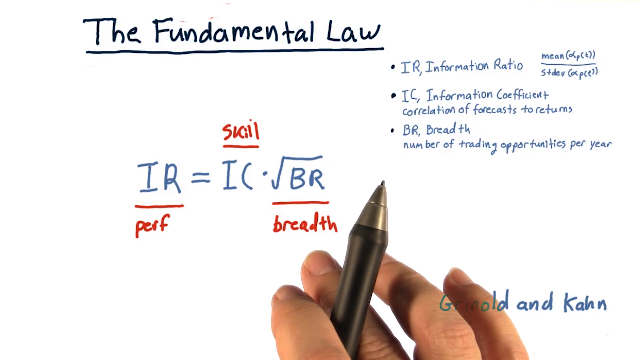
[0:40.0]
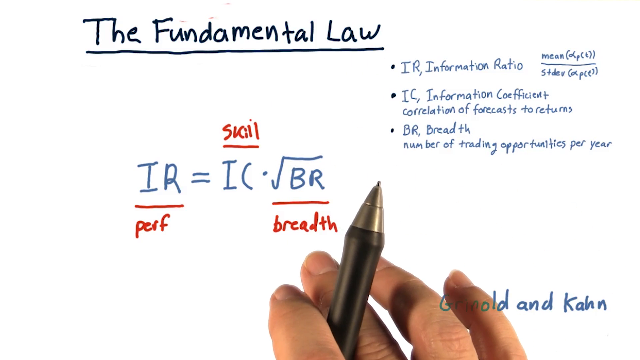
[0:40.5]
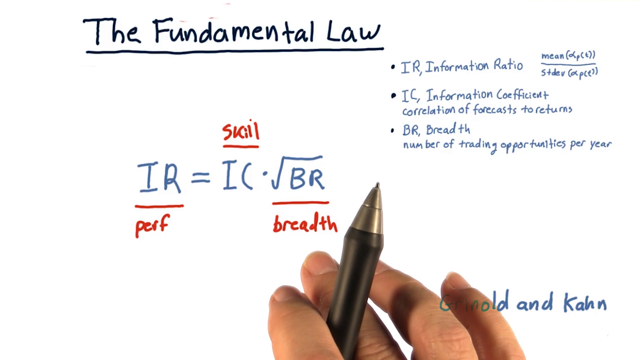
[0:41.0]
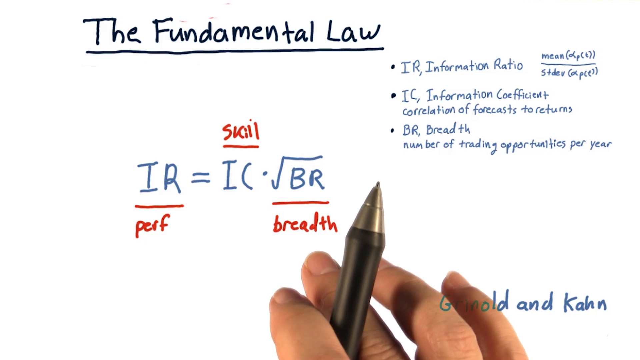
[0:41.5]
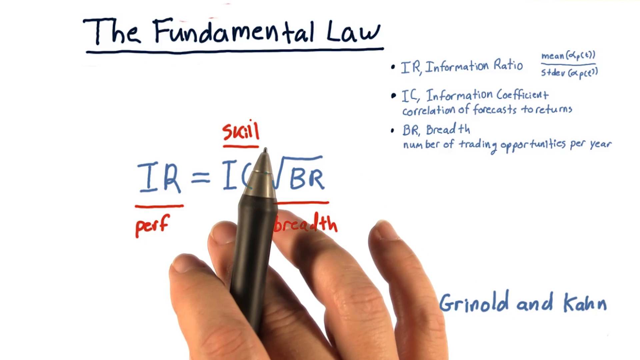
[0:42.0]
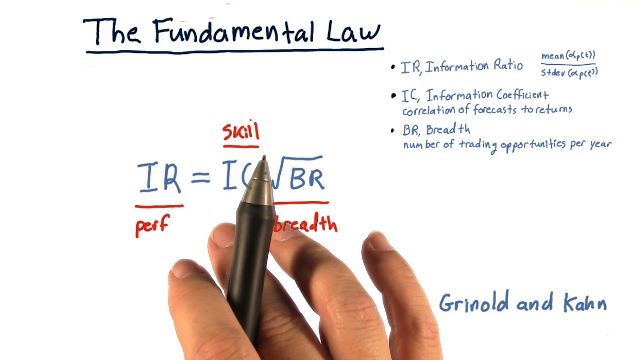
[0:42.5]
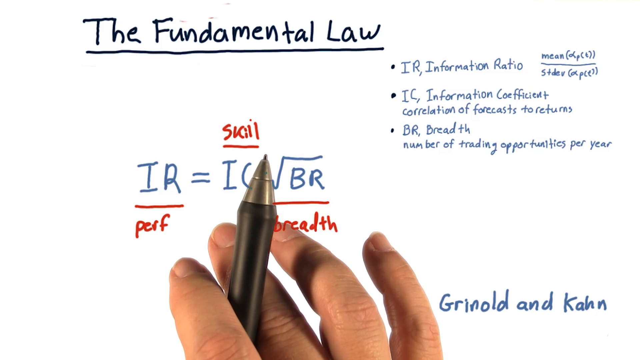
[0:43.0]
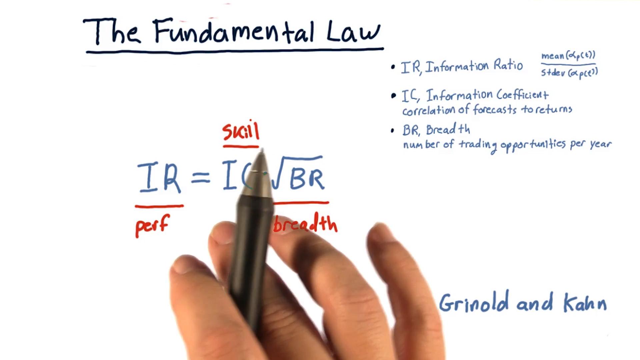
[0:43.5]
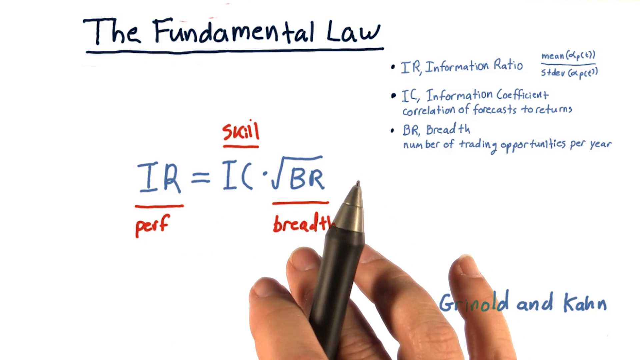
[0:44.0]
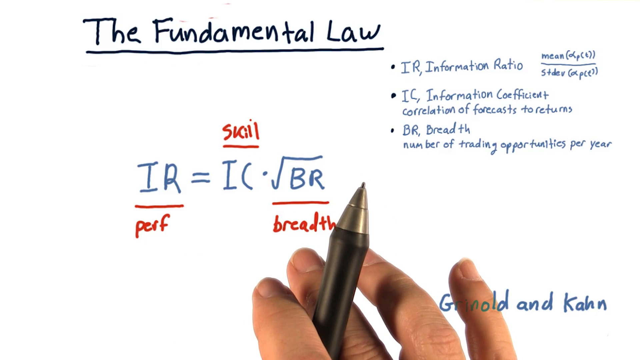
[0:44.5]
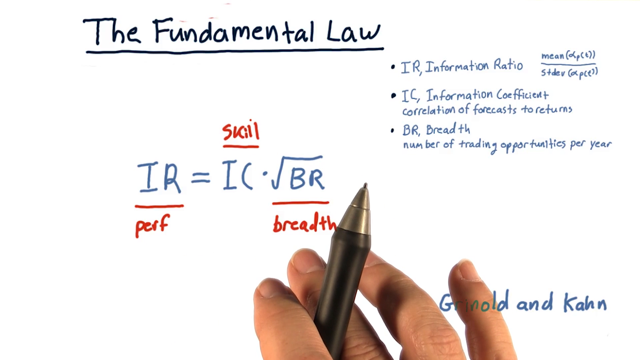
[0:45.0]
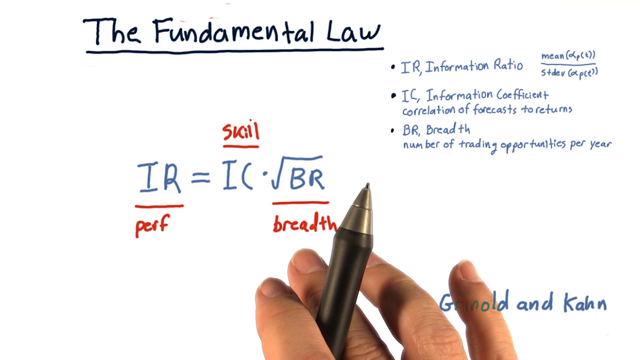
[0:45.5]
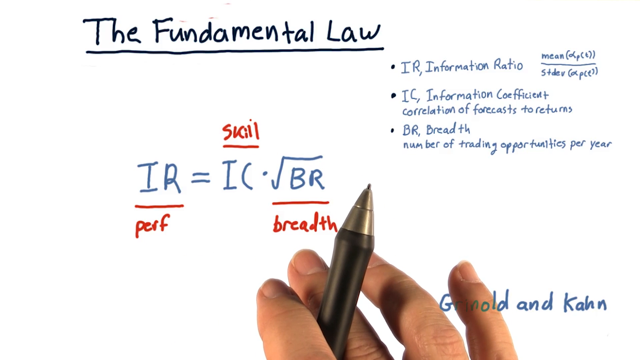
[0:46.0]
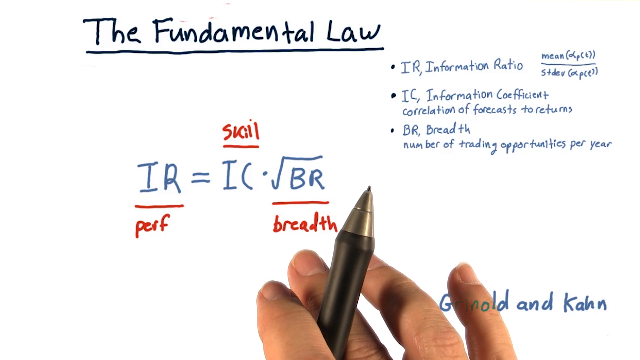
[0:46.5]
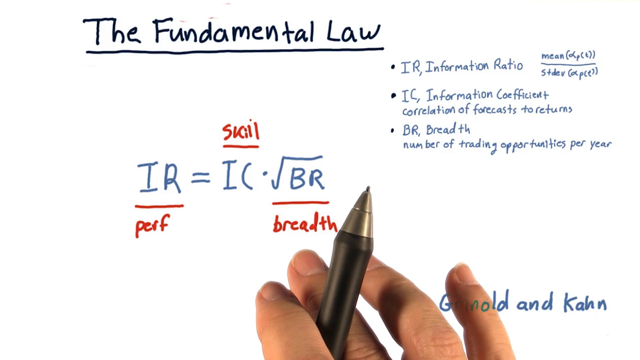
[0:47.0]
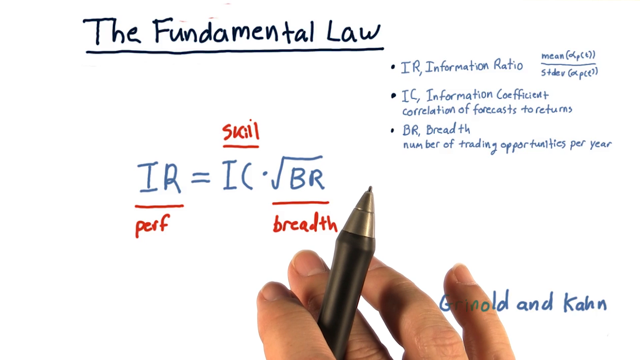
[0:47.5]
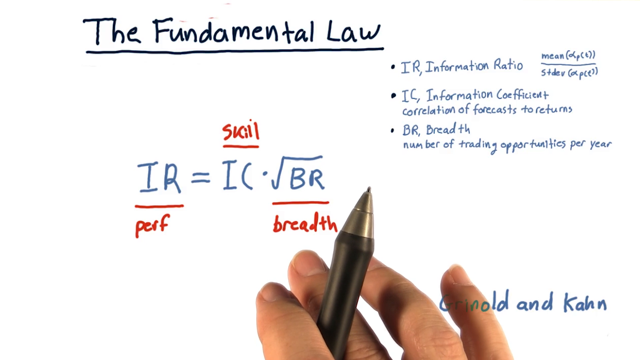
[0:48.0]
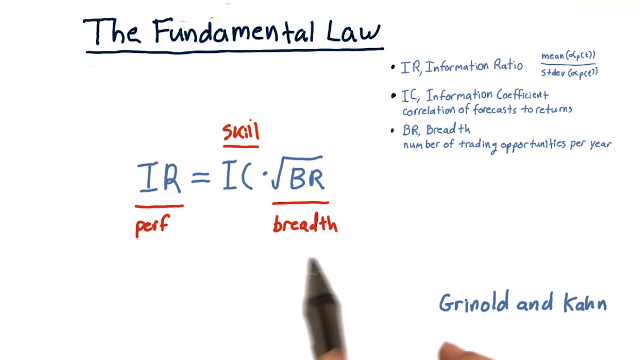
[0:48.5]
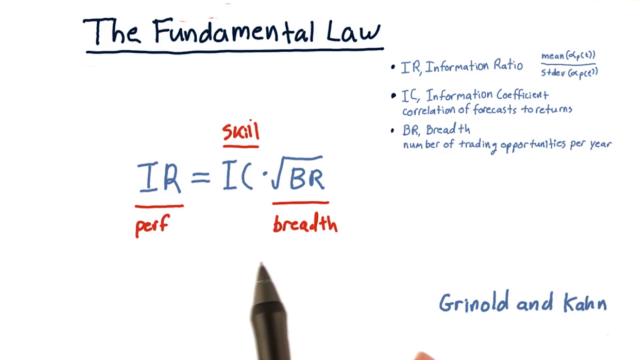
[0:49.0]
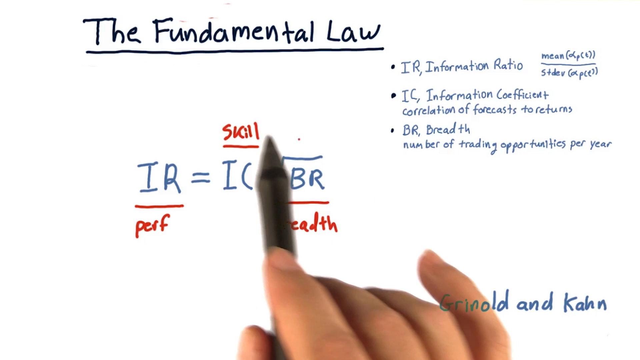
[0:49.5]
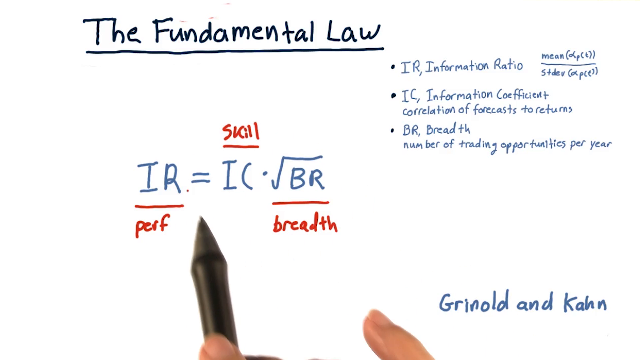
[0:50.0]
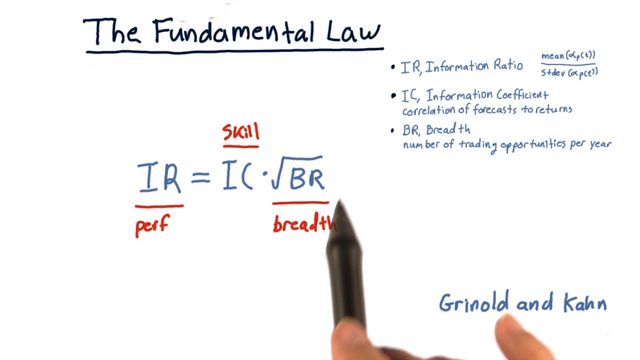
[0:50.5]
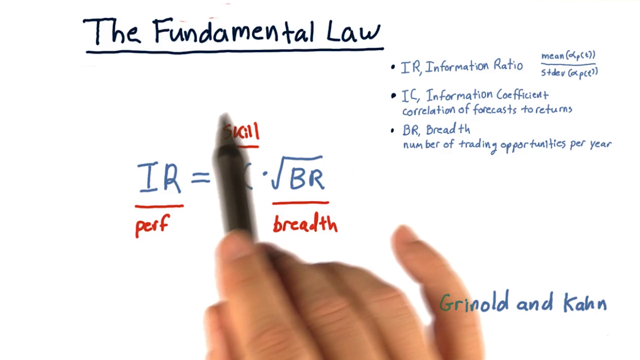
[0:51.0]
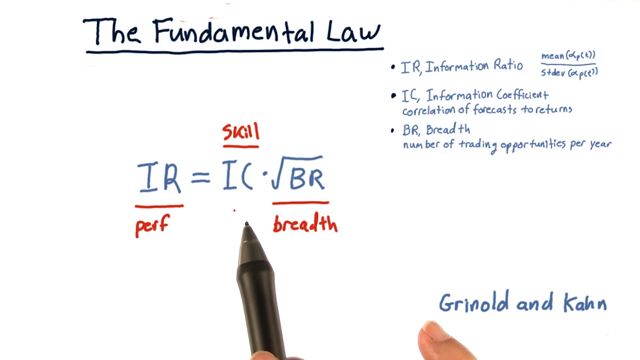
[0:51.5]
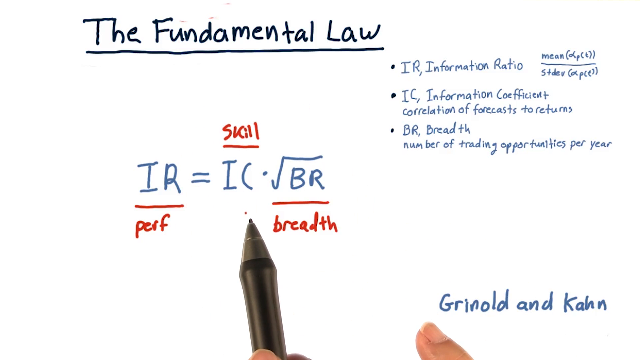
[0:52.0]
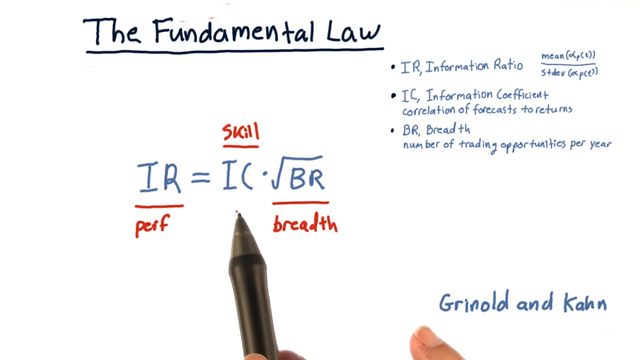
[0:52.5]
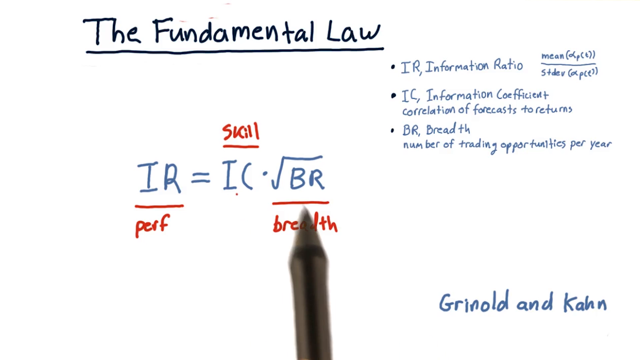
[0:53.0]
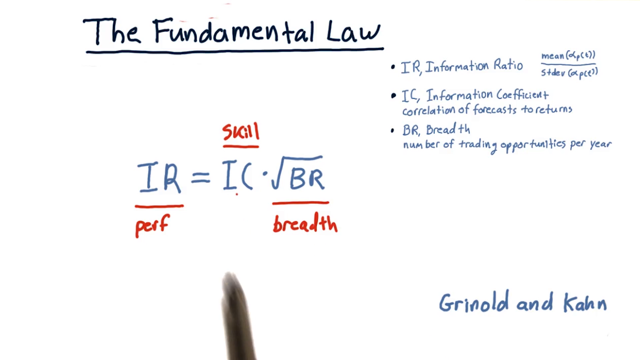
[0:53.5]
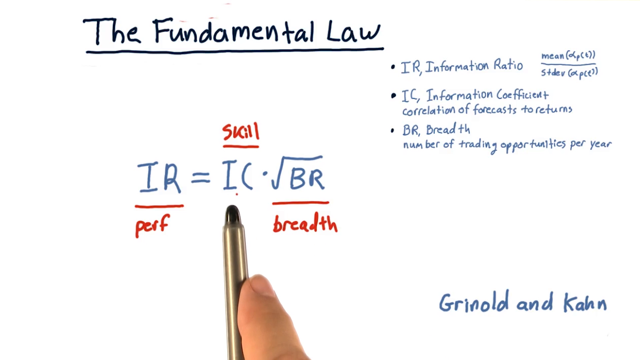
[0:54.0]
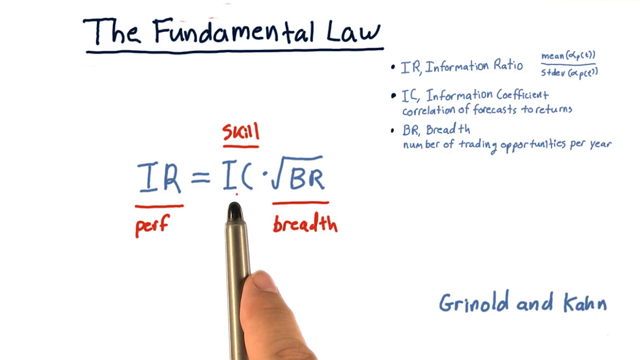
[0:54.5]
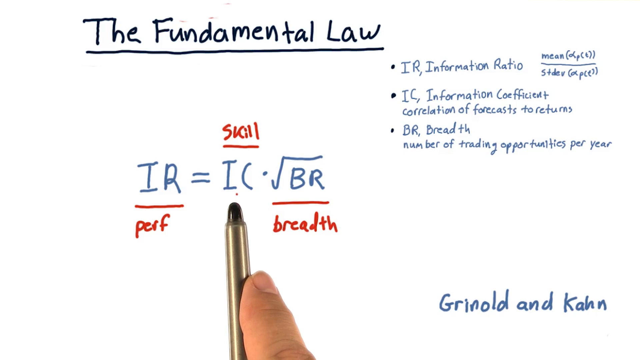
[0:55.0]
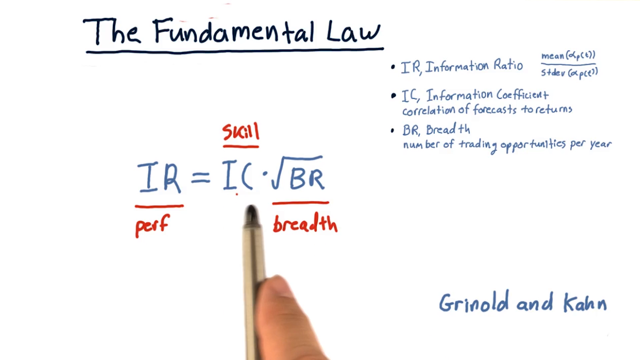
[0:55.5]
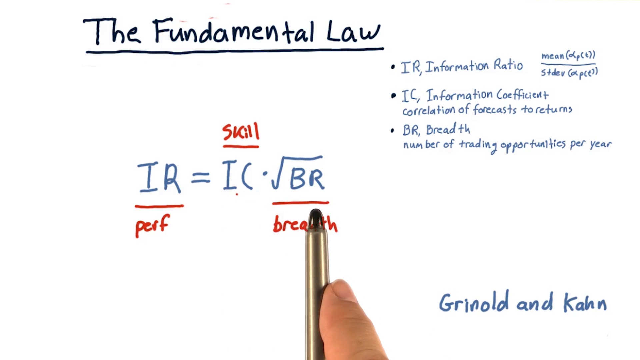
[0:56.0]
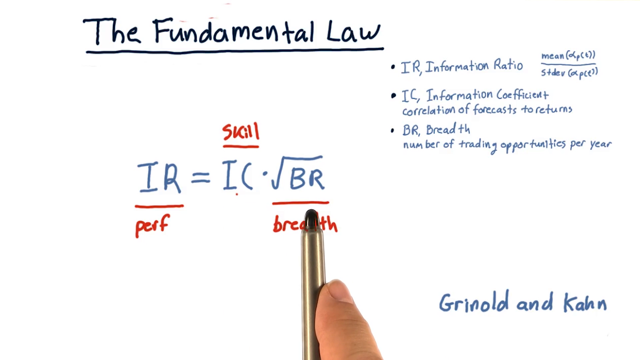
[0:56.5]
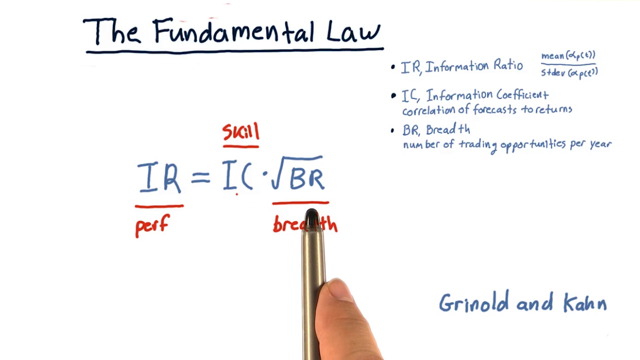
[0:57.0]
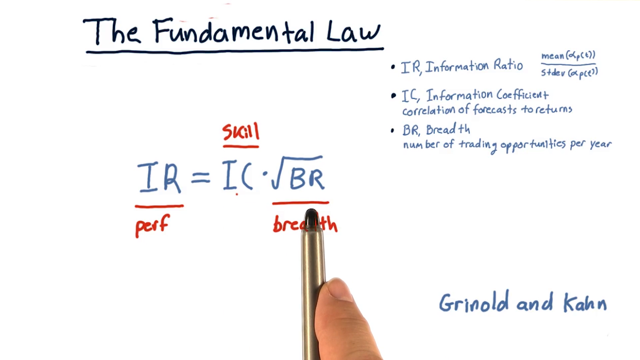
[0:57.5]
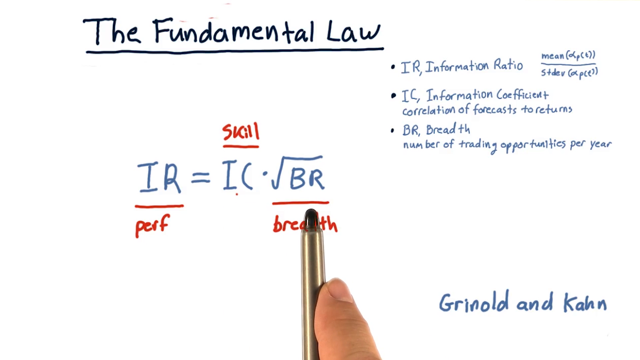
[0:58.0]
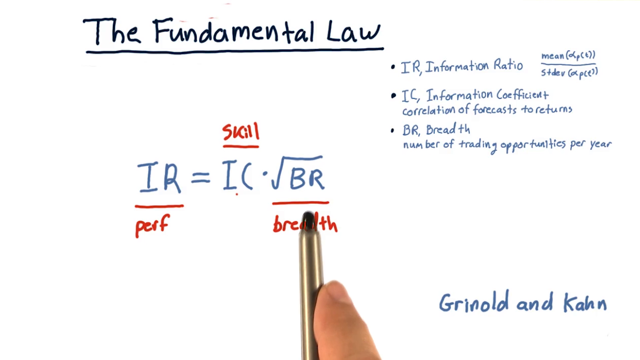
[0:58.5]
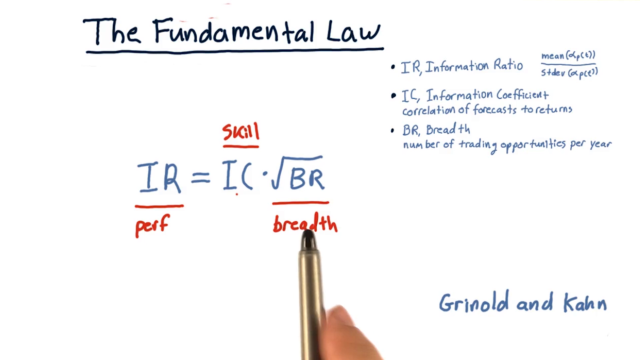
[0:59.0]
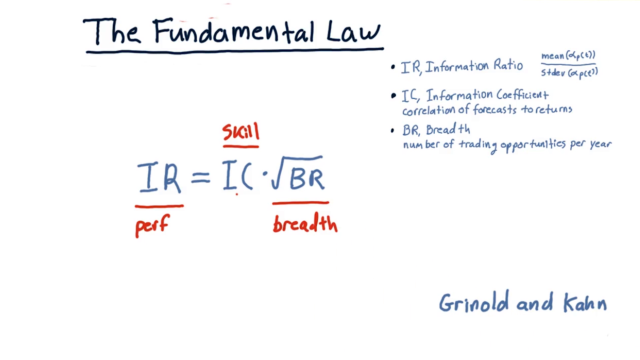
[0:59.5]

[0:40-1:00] A formula is being created. The writing says "IR is equal to IC dot into breath," with terms divided by breath.